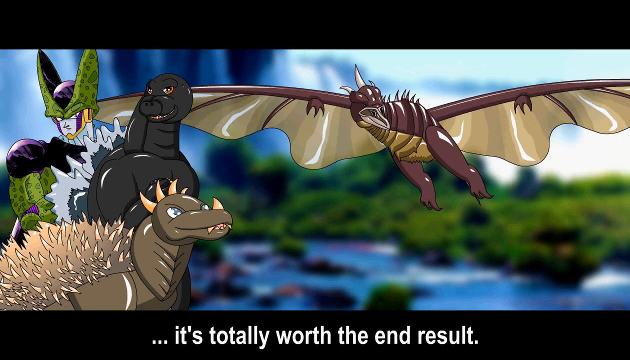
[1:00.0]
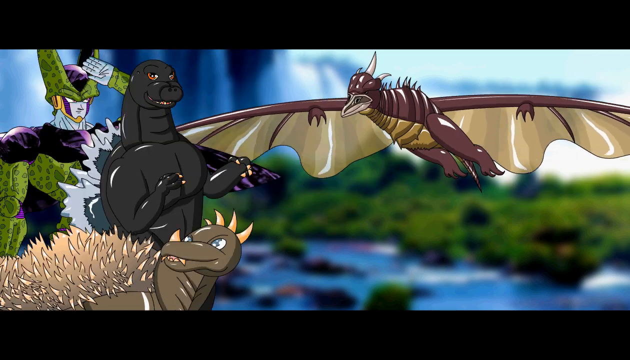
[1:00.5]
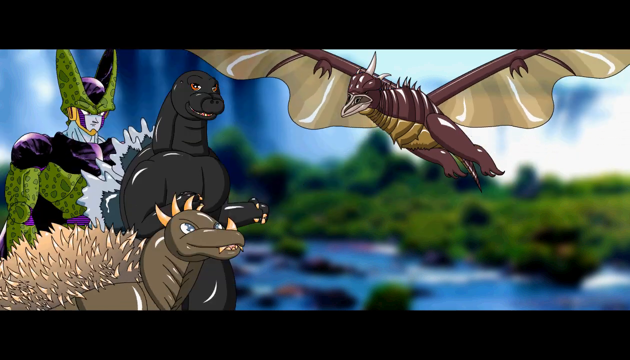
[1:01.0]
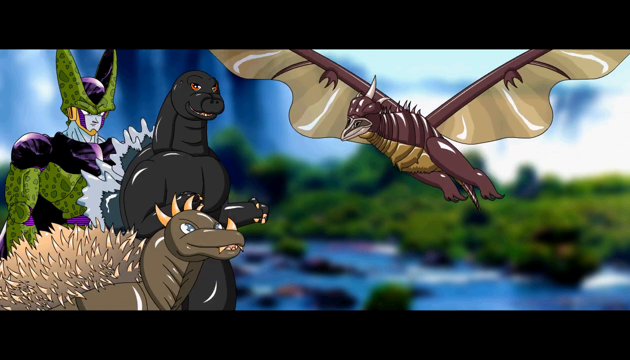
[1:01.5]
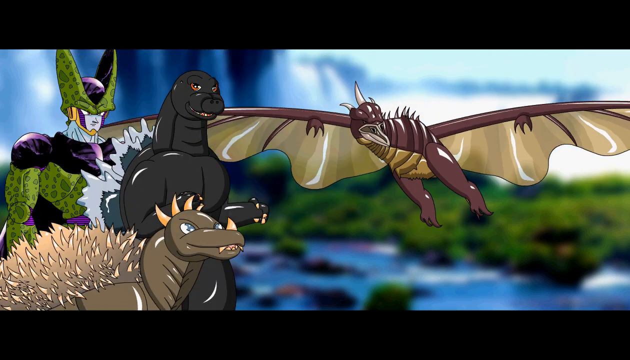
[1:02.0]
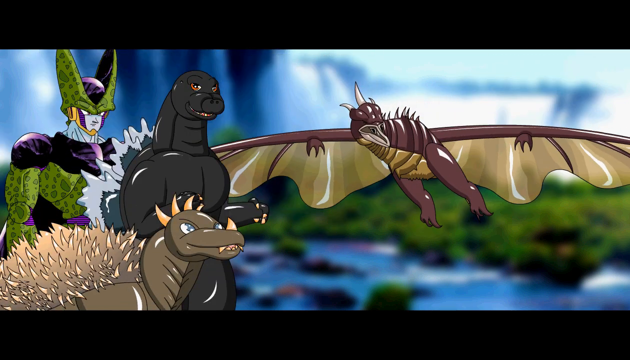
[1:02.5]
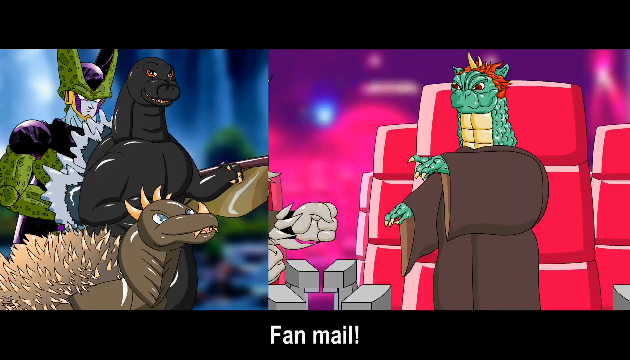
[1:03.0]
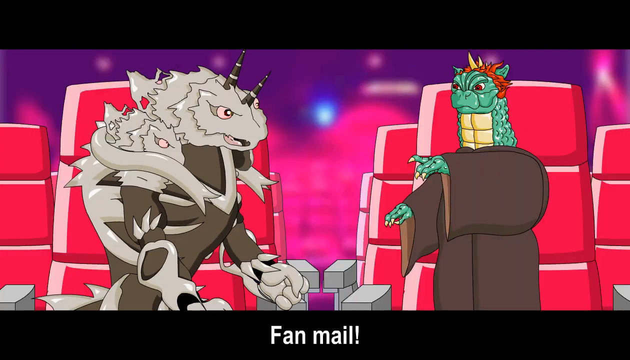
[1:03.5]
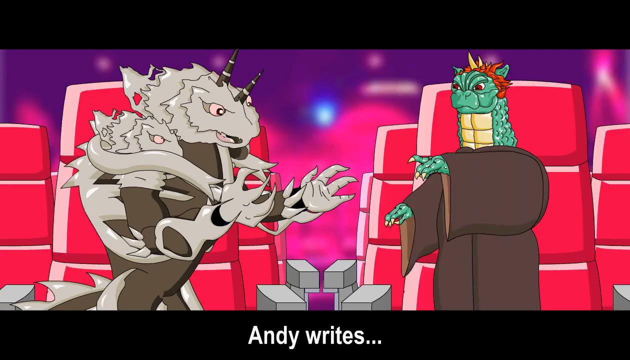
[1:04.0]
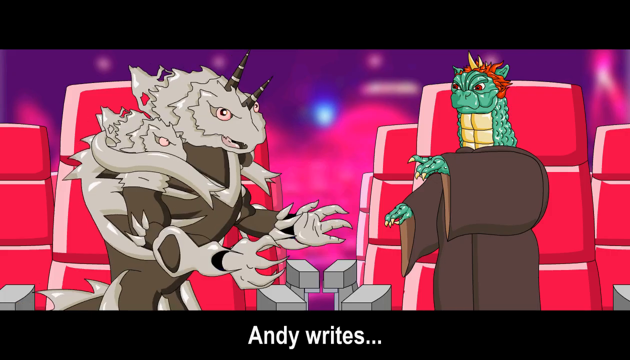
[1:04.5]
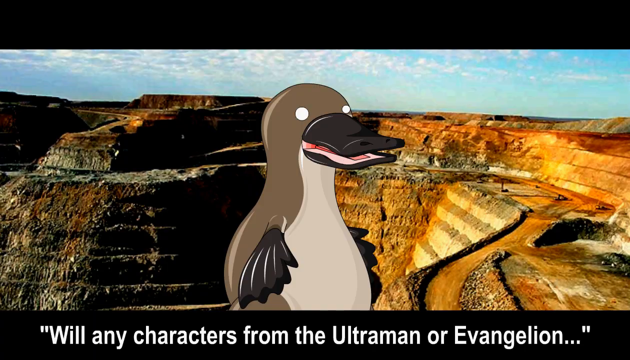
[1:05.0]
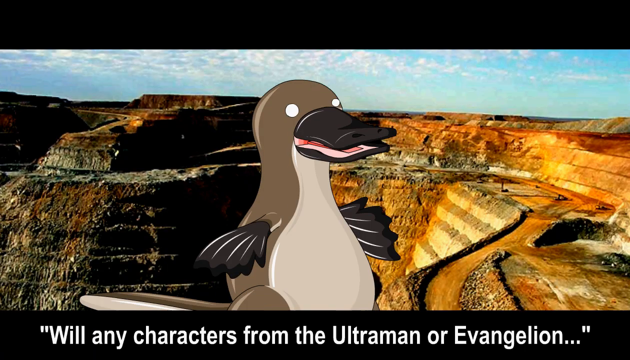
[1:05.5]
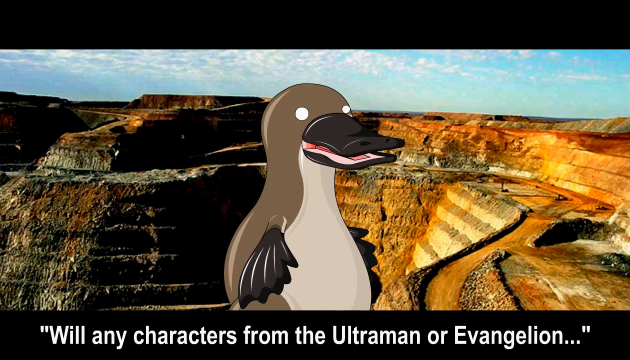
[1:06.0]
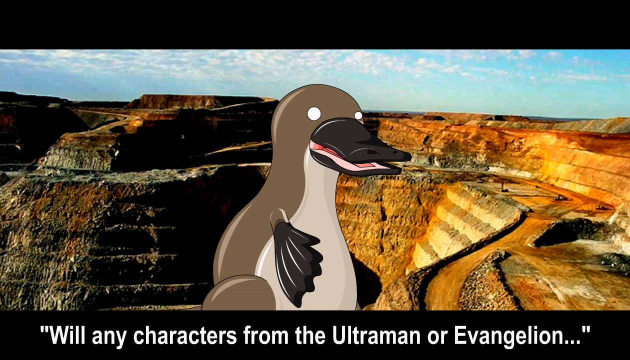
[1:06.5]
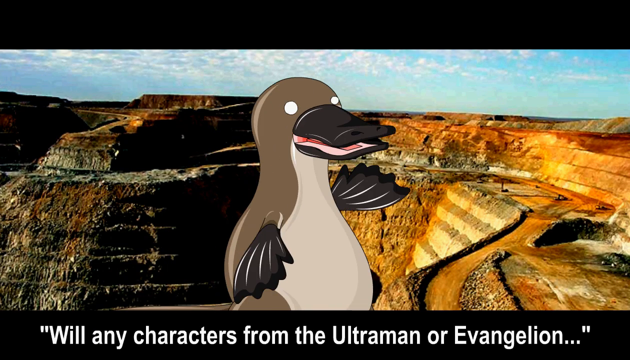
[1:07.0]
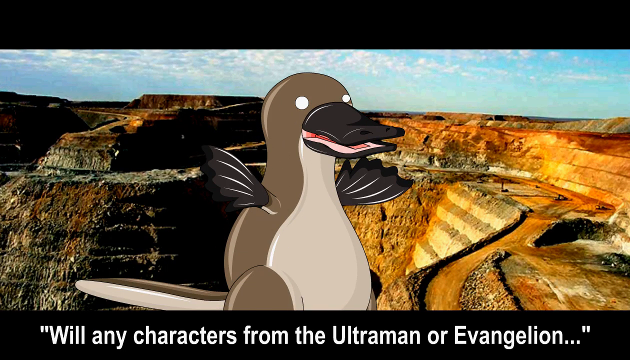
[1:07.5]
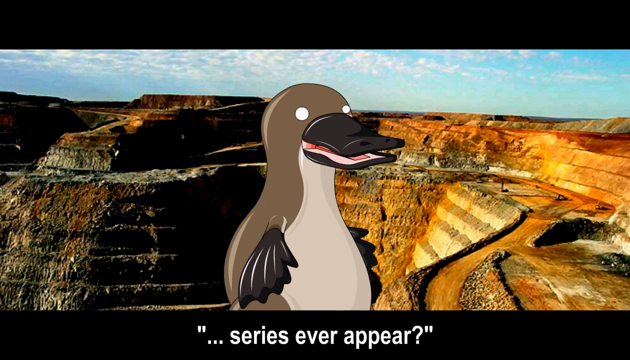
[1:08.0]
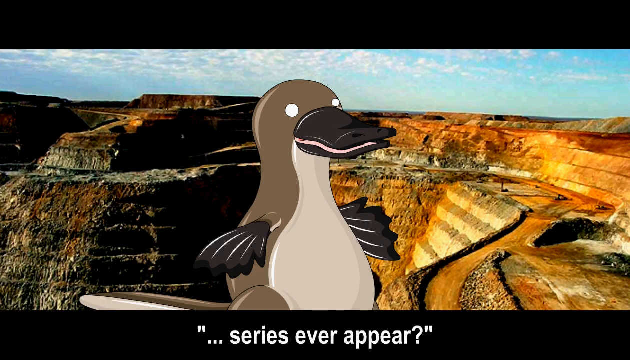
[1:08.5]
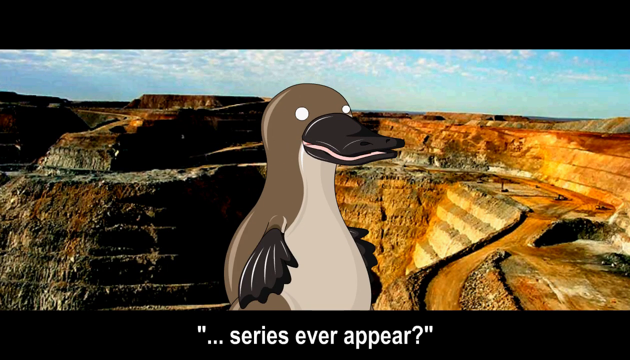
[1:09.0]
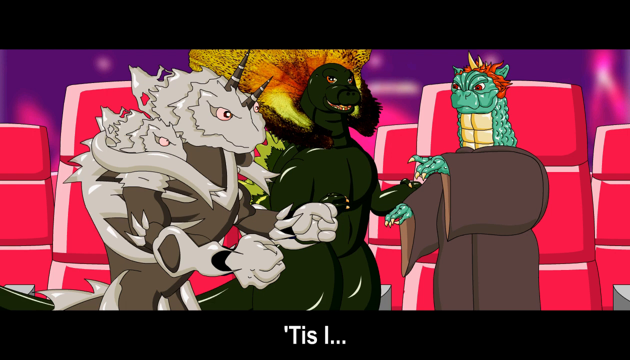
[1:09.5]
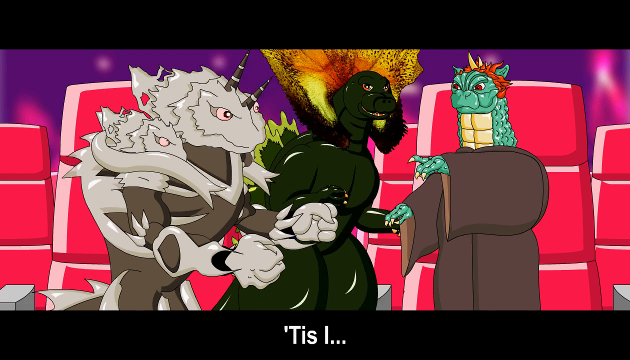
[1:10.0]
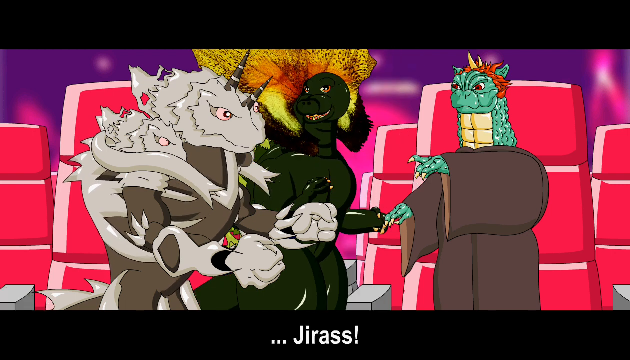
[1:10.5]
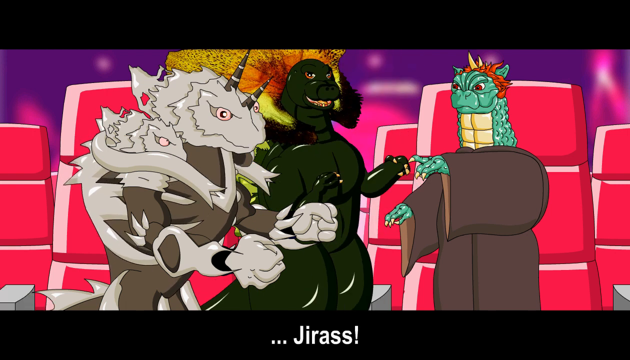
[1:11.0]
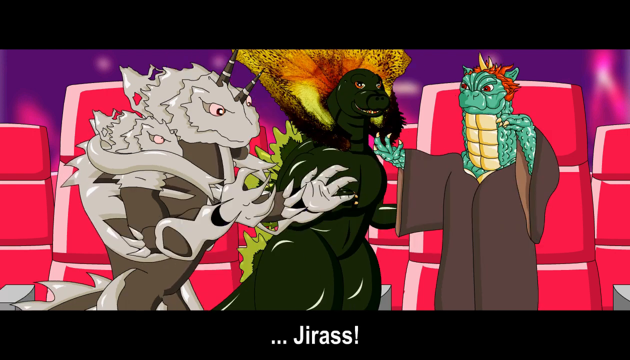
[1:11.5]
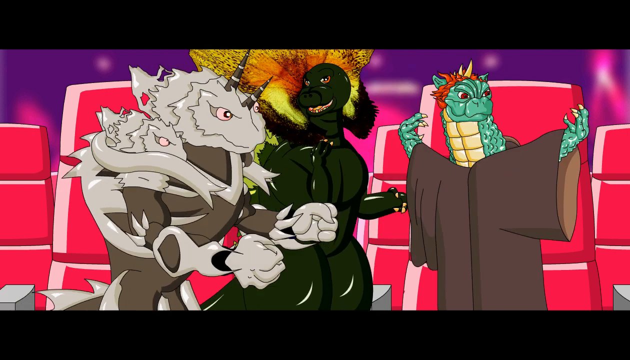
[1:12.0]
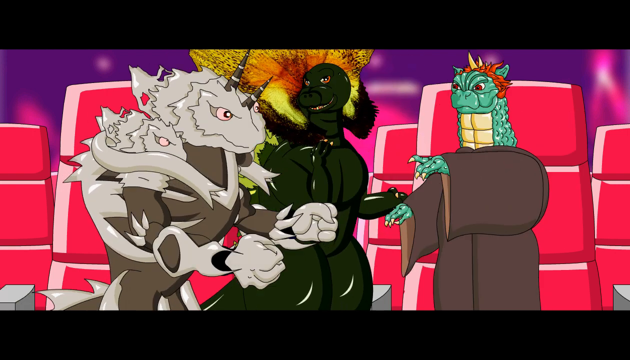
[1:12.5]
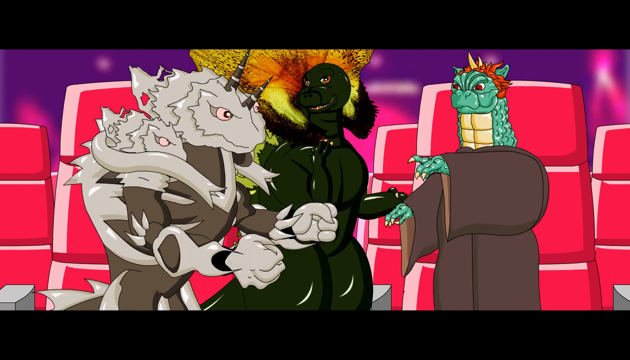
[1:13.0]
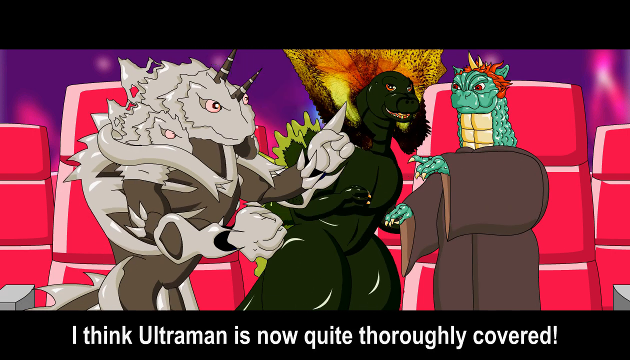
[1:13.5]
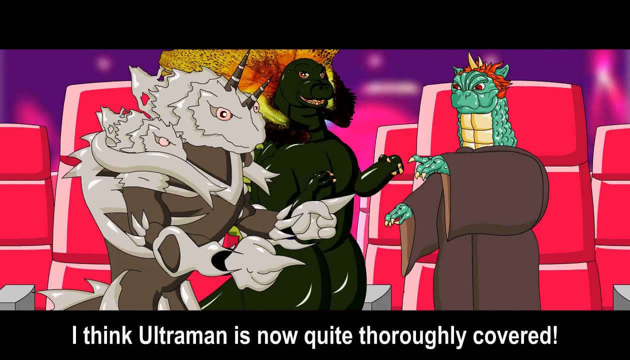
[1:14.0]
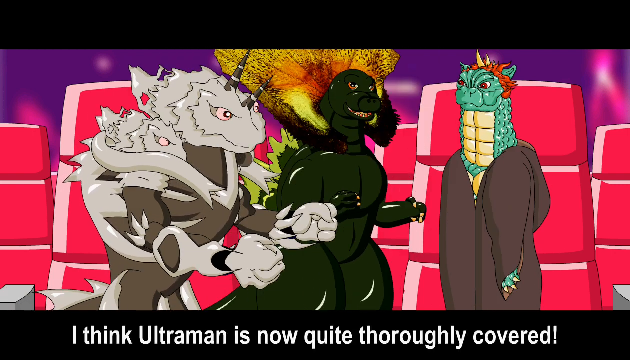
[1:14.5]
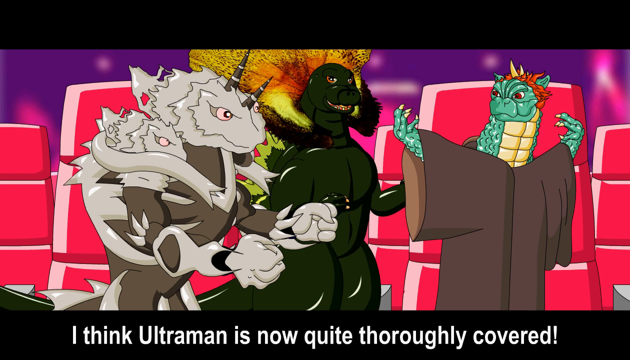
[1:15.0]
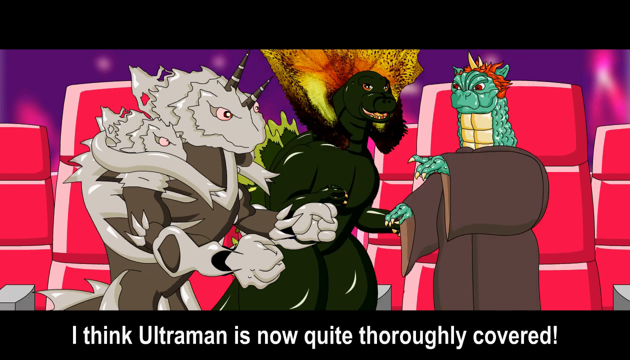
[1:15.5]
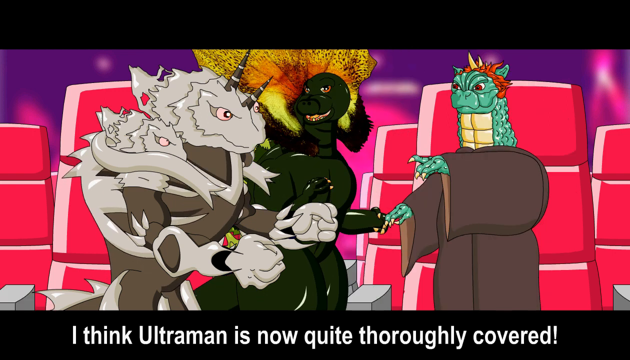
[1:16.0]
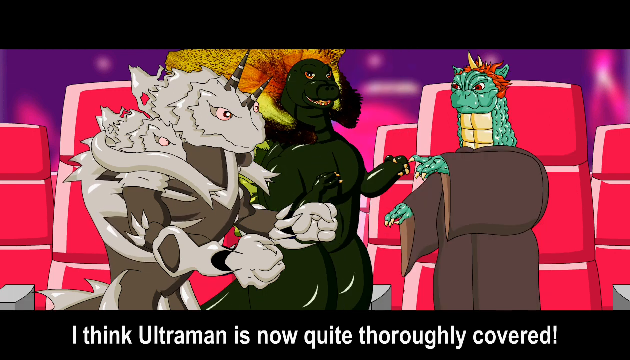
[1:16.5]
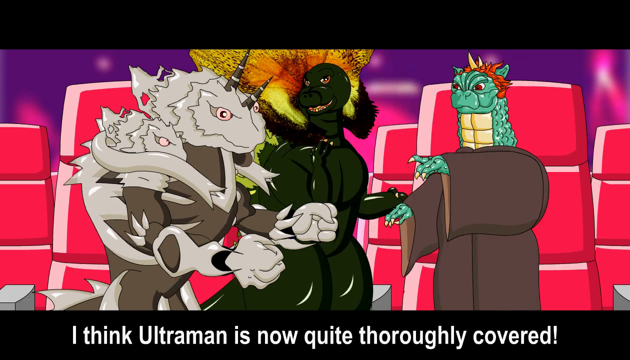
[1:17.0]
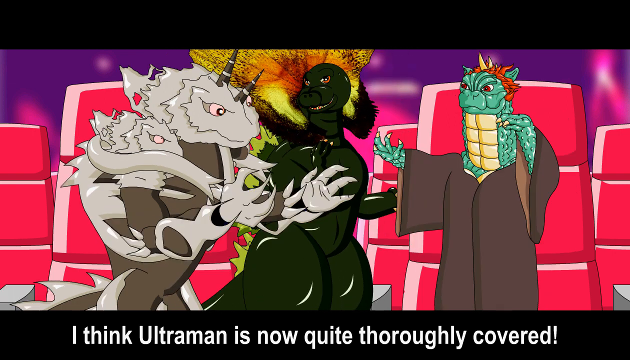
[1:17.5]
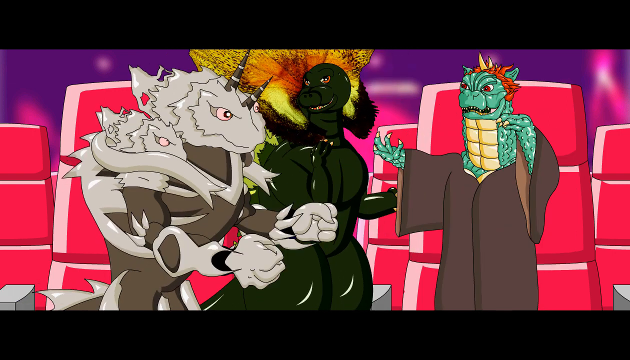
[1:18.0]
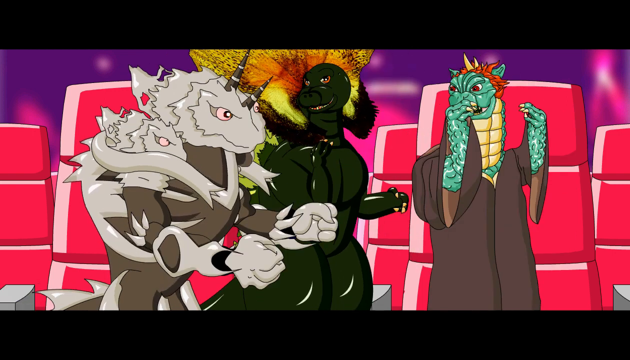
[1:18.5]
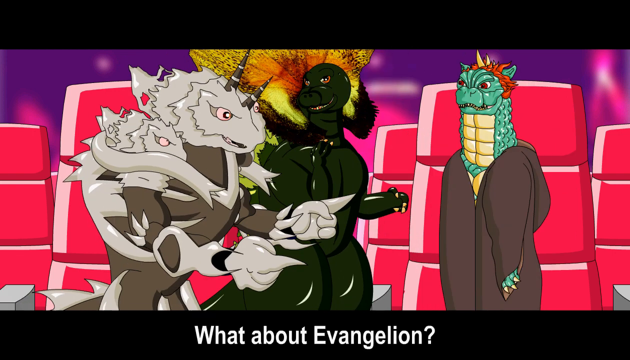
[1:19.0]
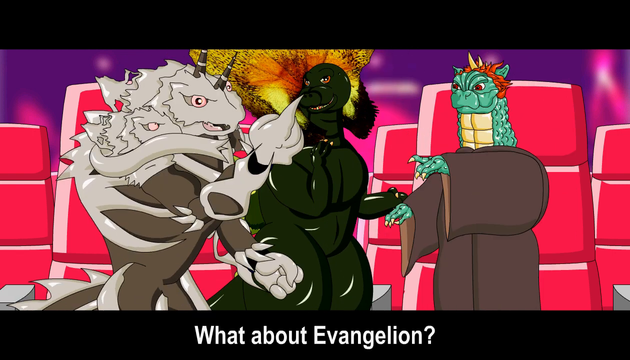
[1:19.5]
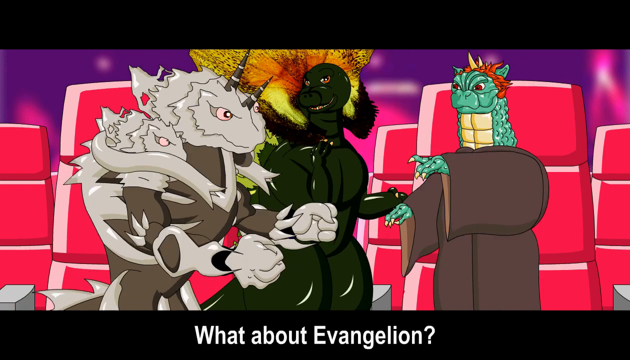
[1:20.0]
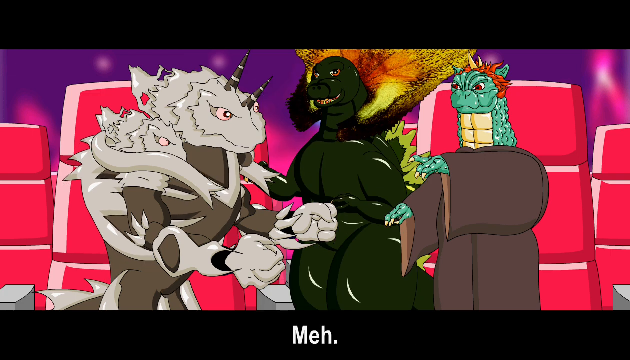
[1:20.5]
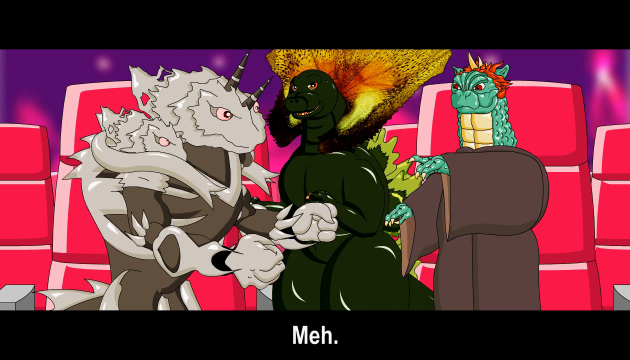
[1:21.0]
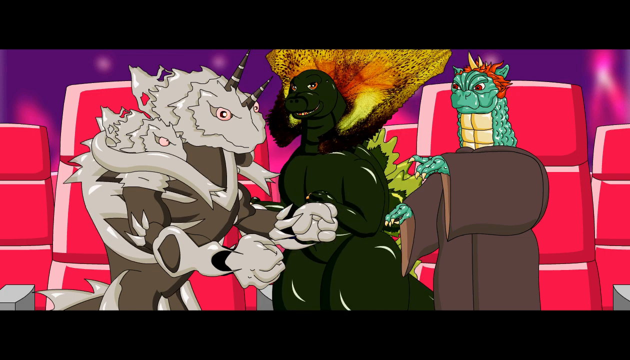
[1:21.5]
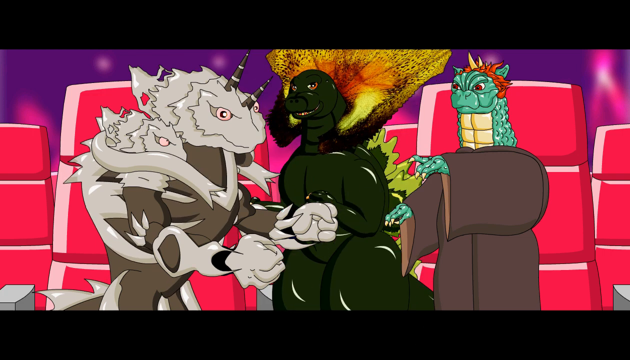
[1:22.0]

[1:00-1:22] After the dinosaurs finish their account of how curly fries are made, the video moves to a different screen showing two clearly fan-made characters who seem to be inside some sort of UFO or spaceship. They talk among themselves and seem to be answering what they call fan mail; their questions and answers appear as text at the bottom of the screen. The view briefly changes to the Grand Canyon, where a platypus asks a question in text: "will any of the characters from Ultraman and Evangelion show up". The video then returns to the spaceship-like setting, where there are now three characters talking. One answers, "I think Ultraman is quite thoroughly covered," another asks, "what about Evangelion," and the third says, "me." The video ends very abruptly.